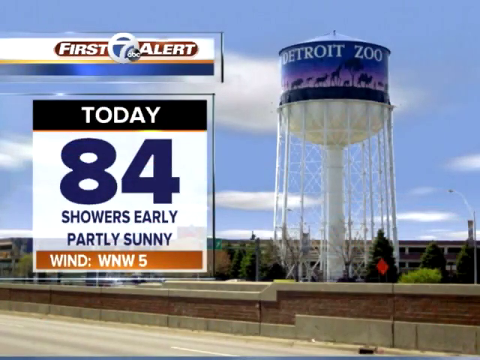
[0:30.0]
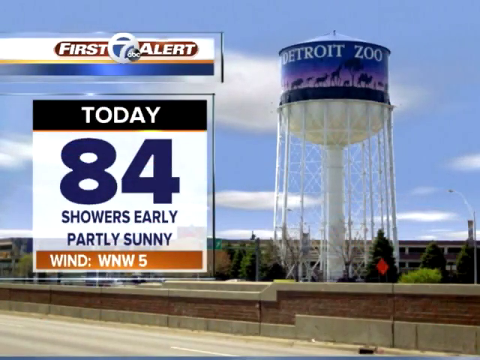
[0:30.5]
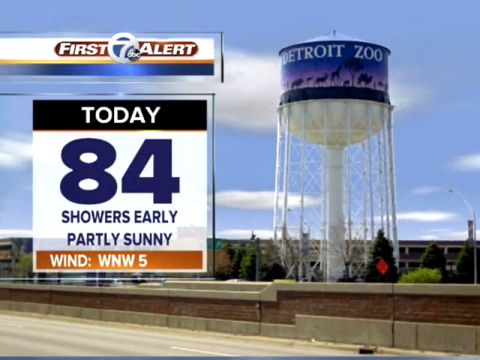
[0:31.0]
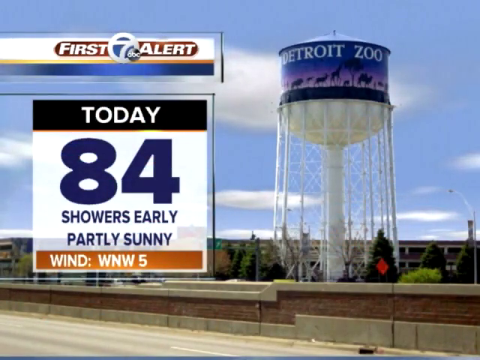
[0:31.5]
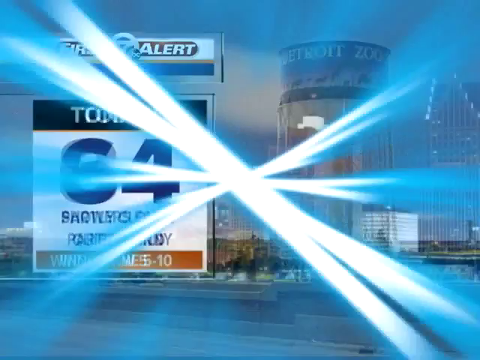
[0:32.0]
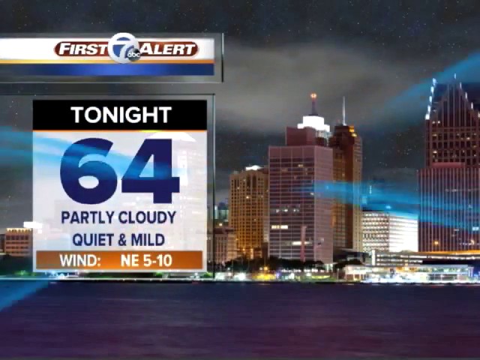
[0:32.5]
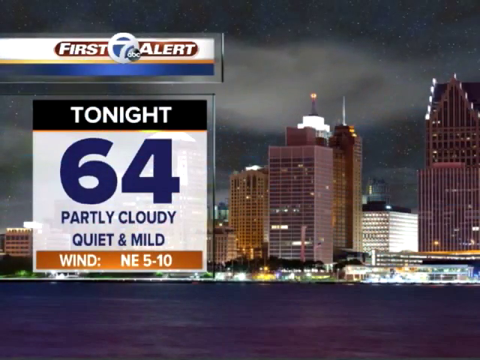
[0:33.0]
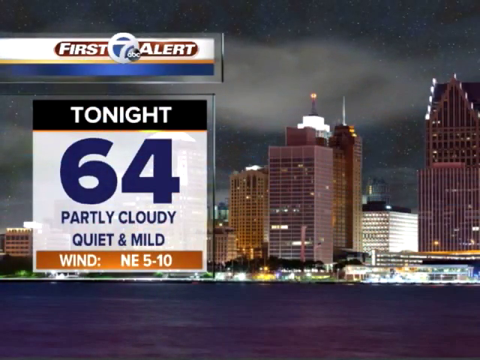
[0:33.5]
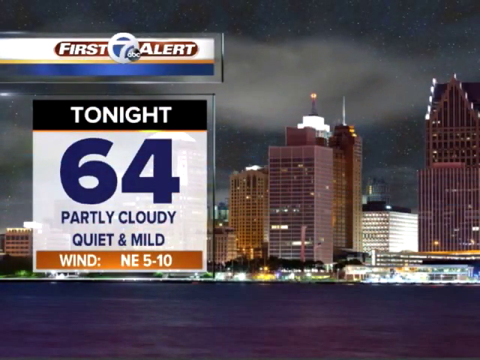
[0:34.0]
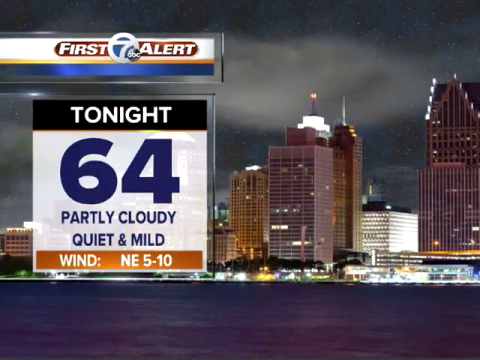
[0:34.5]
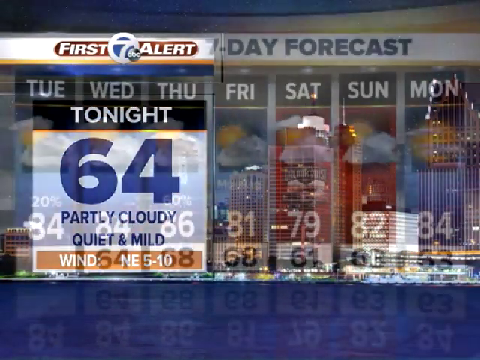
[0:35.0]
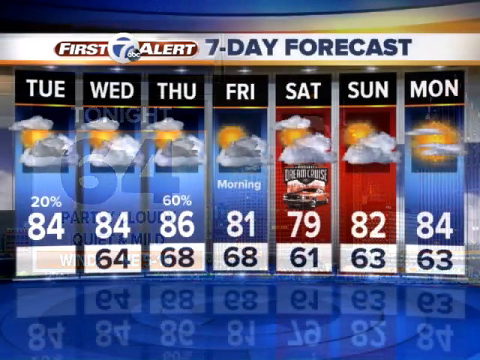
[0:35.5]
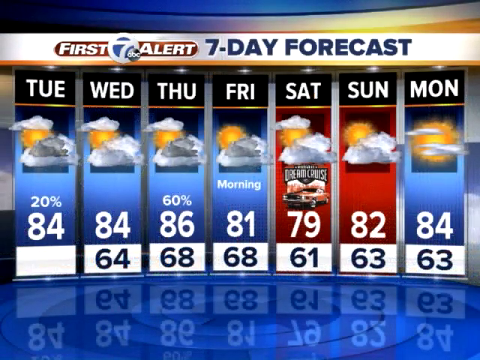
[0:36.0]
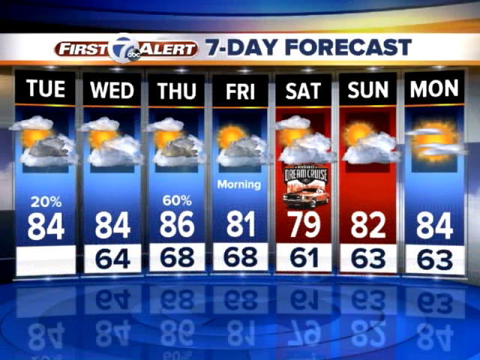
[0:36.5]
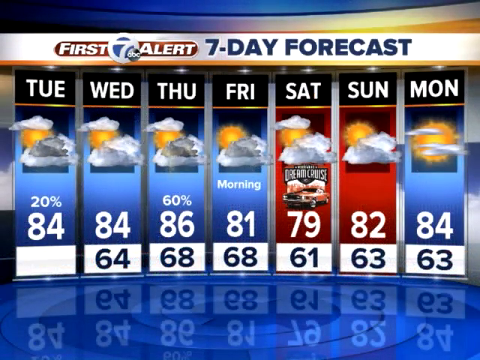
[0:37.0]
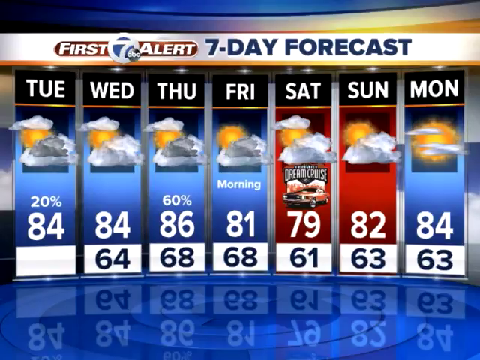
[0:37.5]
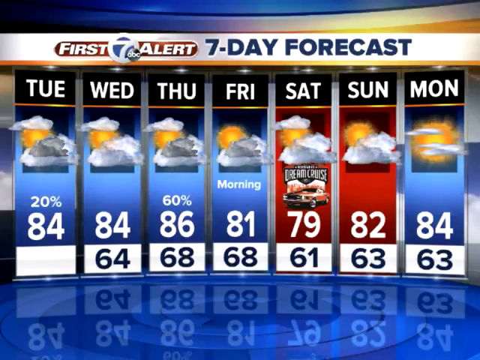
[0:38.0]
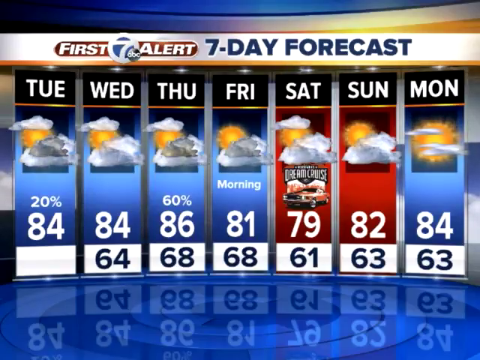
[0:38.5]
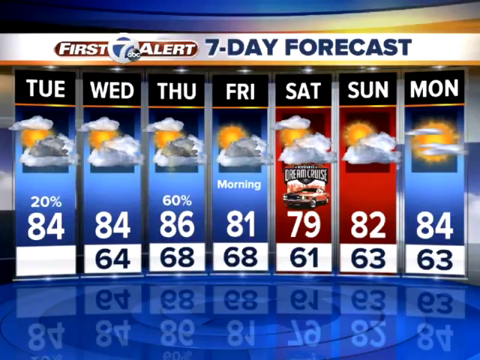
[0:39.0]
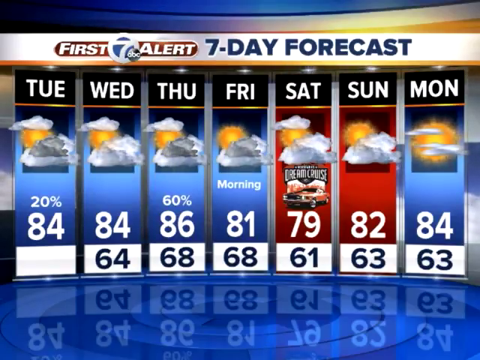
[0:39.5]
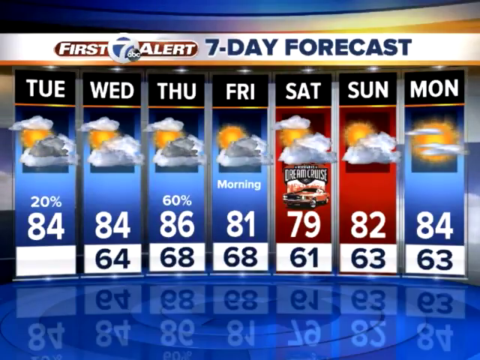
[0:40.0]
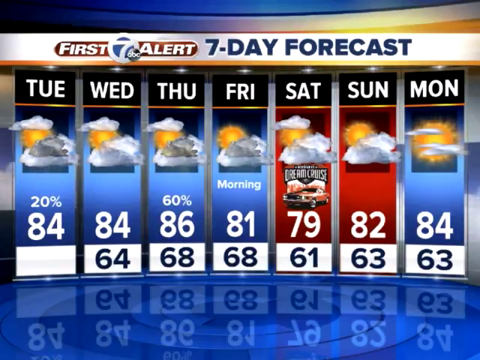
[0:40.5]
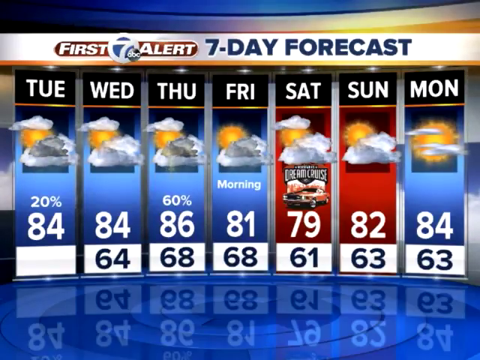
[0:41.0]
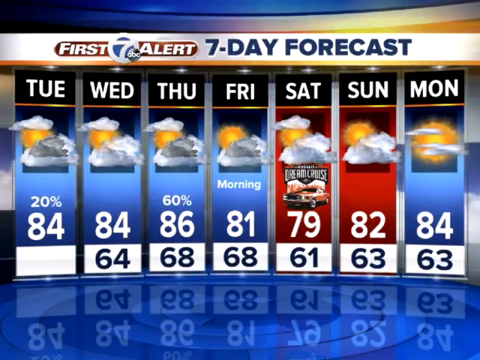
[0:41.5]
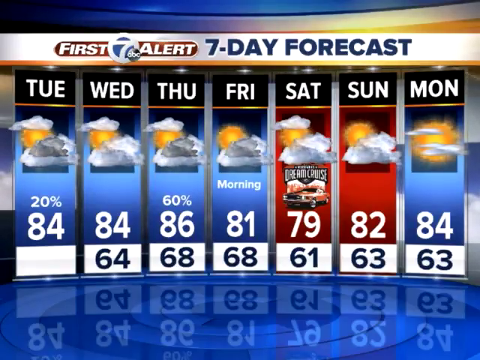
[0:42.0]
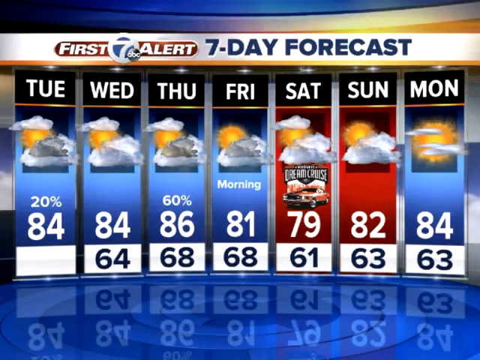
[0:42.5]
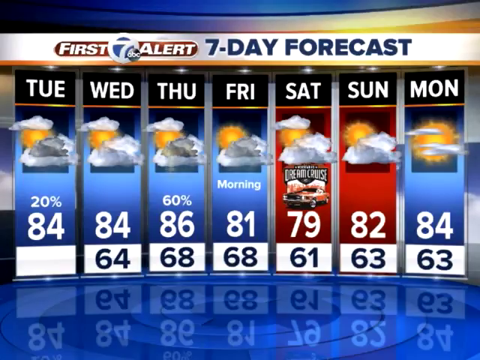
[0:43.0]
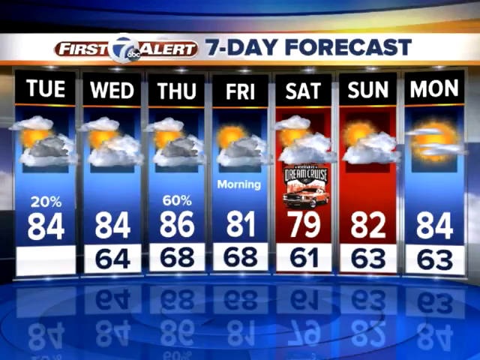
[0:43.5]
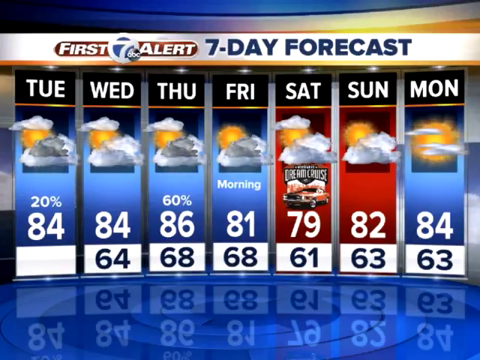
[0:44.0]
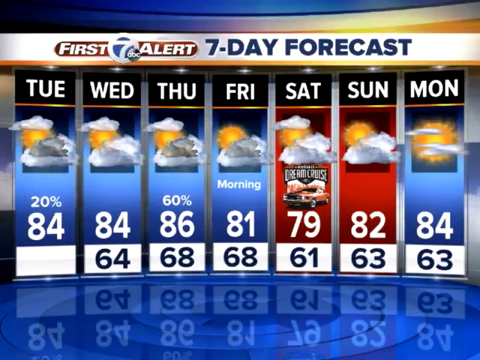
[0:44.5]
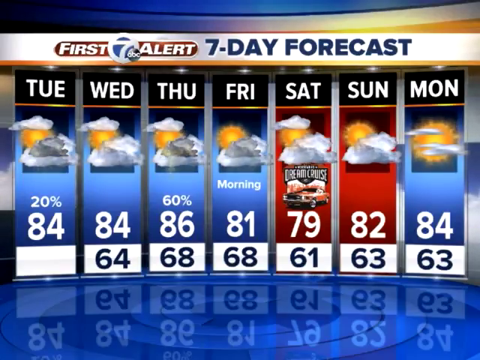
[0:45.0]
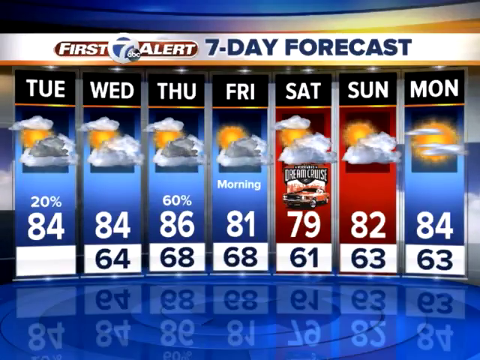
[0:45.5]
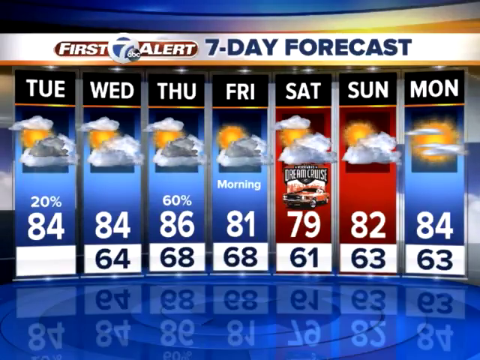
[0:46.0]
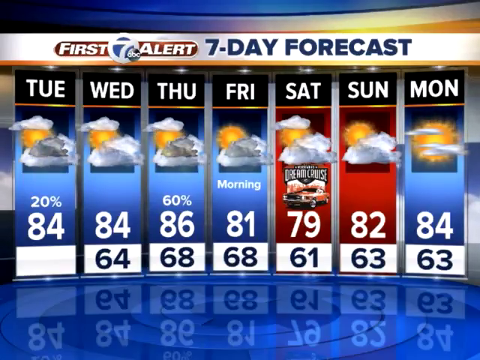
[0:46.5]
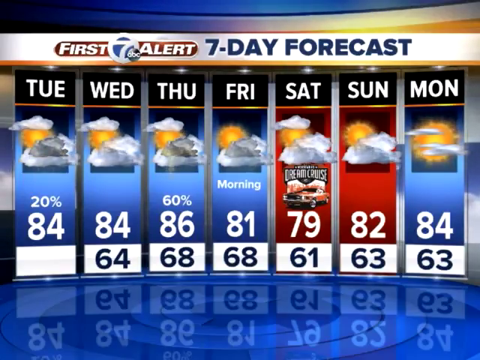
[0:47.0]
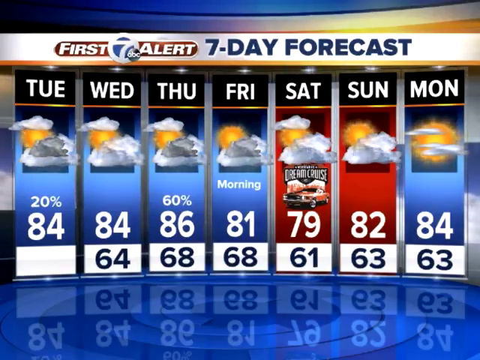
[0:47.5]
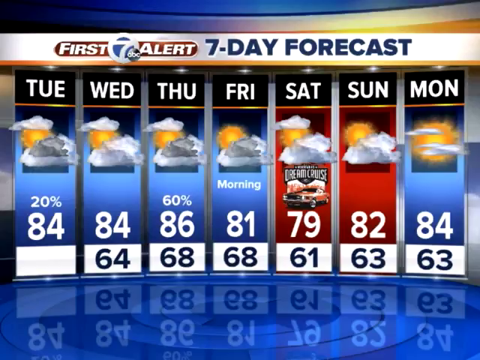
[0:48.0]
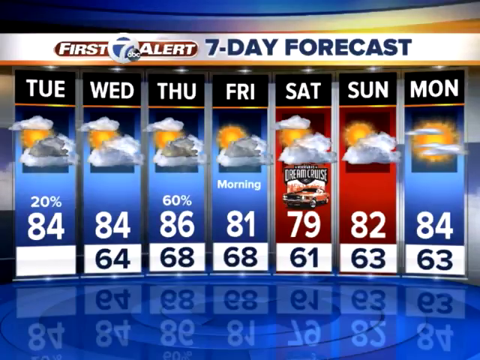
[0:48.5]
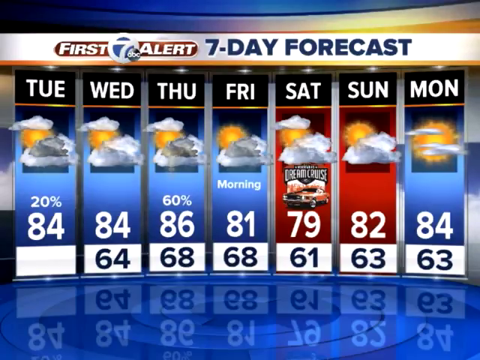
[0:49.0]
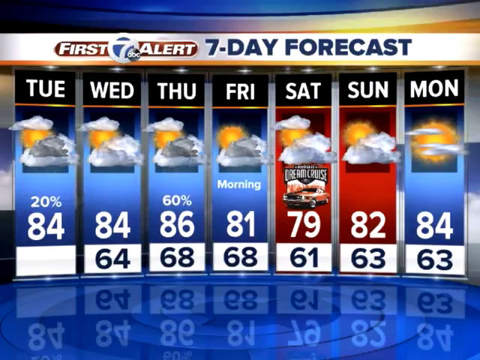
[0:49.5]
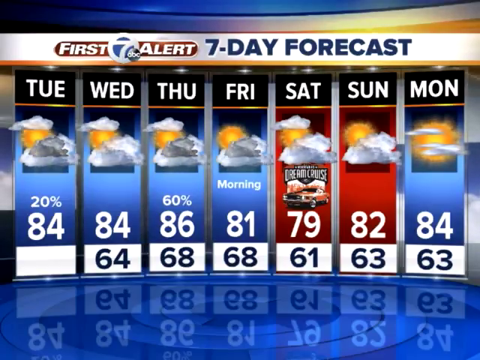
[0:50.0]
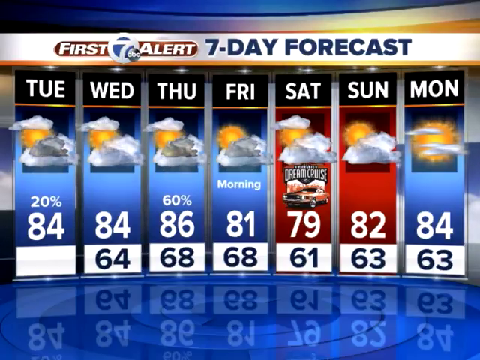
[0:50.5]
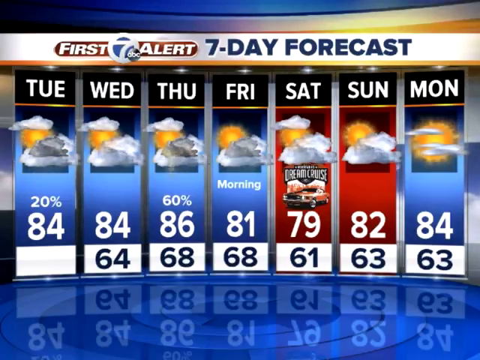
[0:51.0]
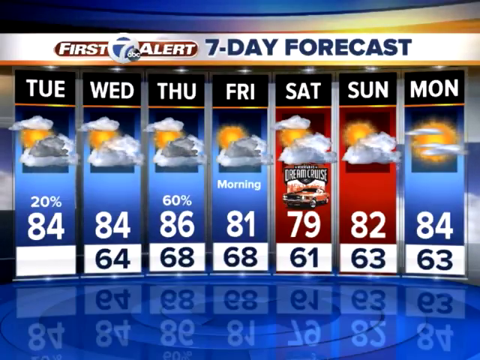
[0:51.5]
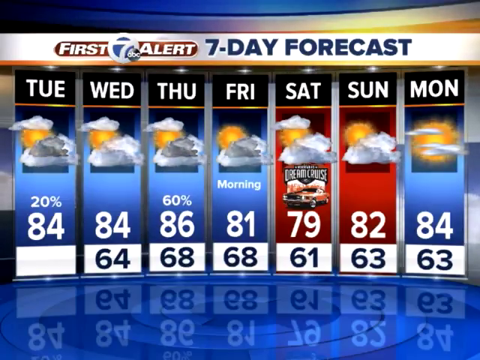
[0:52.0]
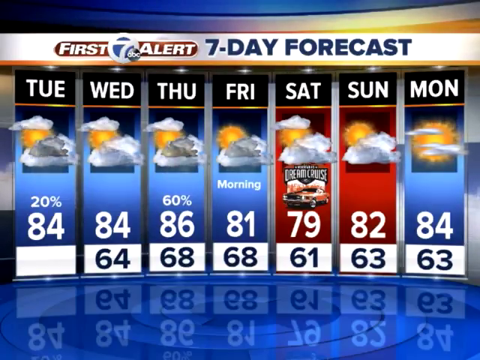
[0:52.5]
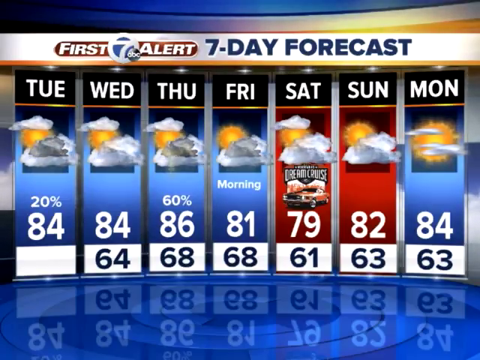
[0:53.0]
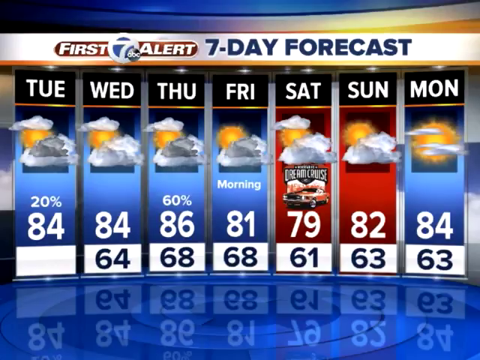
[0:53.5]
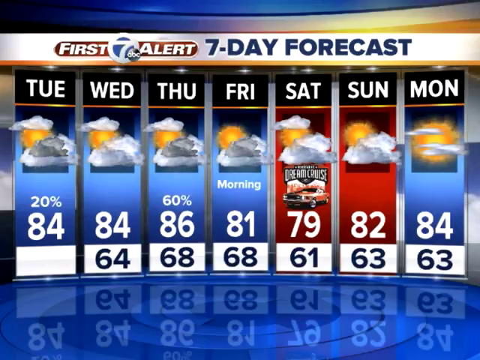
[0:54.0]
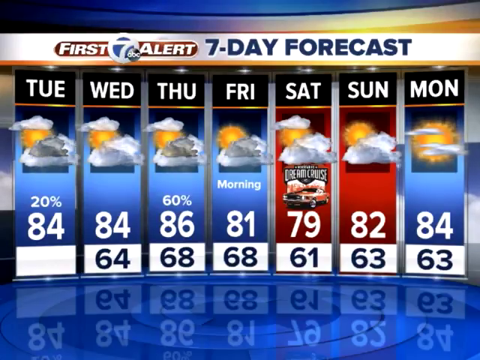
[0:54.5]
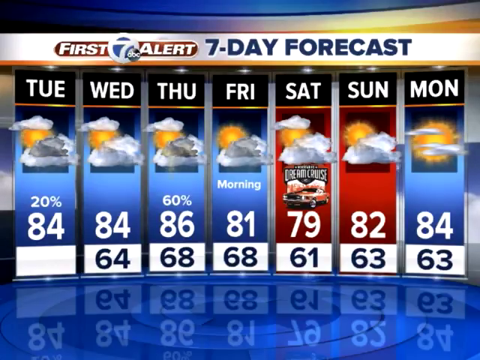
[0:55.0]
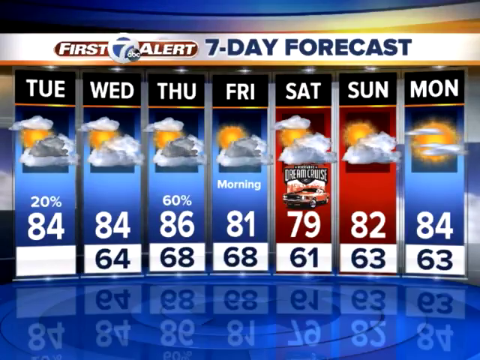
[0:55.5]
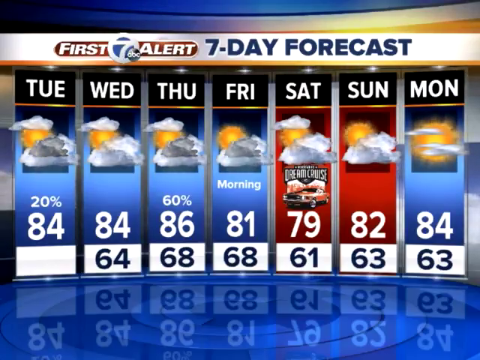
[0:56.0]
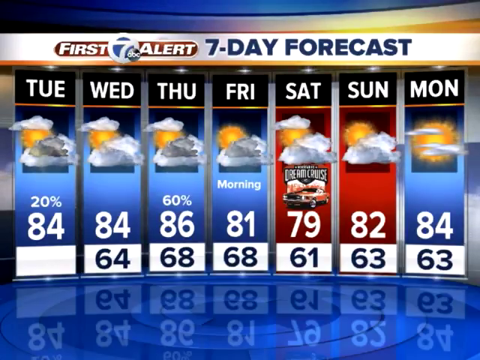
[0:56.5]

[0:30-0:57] What seems to be a tower made in white with white crossbracing appears, along with a pole that says "Detroit Zoo"; it looks like a corn tower. On-screen text reads "today 84 showers" and shows wind. The video switches to a city next to the sea with lighting and text reading "tonight 64". Then a weather forecast shows the different weather during the days, such as windy and sunny, with the numbers 84, 84, 86, 81, 79, 82 and the days Monday, Tuesday, Wednesday, Friday, Saturday, Sunday, Monday. The forecast then shows 64, 68, 68, 61 and the different temperatures, indicating whether it will be sunny or rainy.